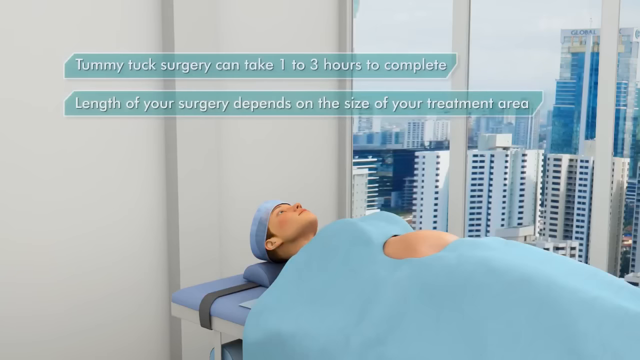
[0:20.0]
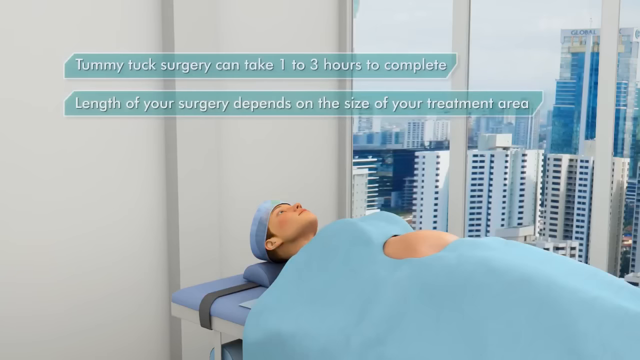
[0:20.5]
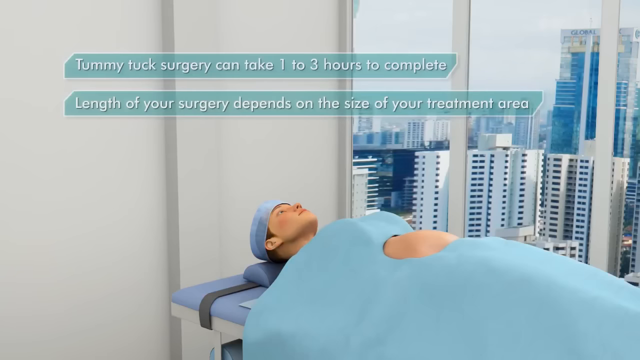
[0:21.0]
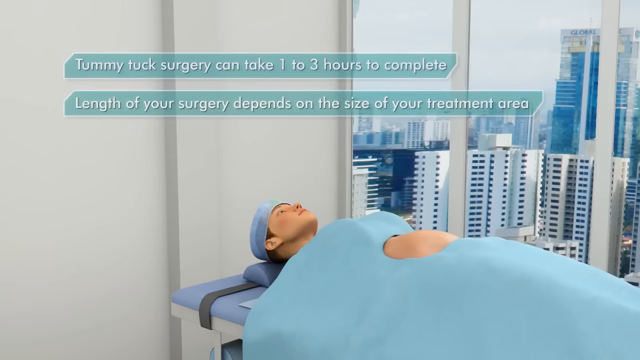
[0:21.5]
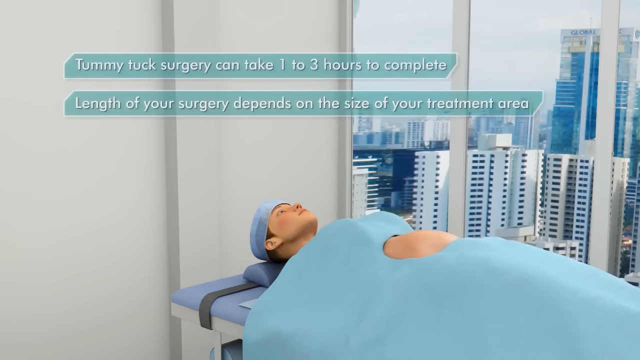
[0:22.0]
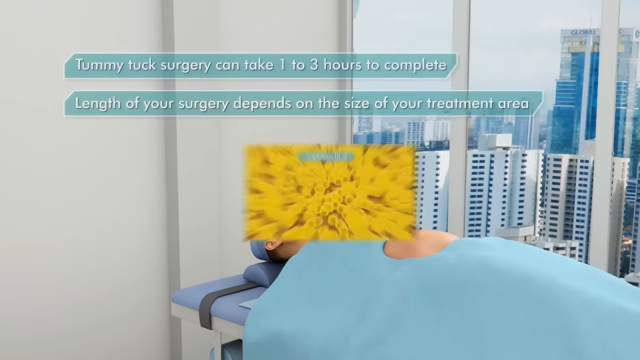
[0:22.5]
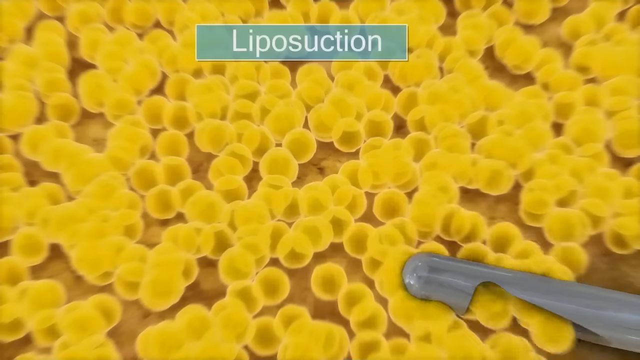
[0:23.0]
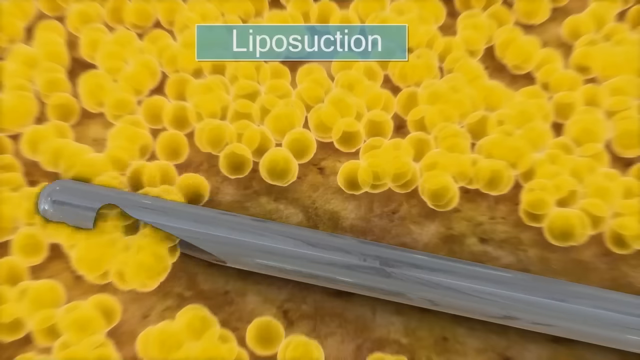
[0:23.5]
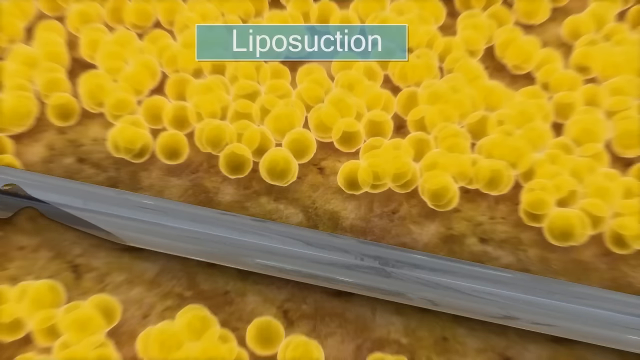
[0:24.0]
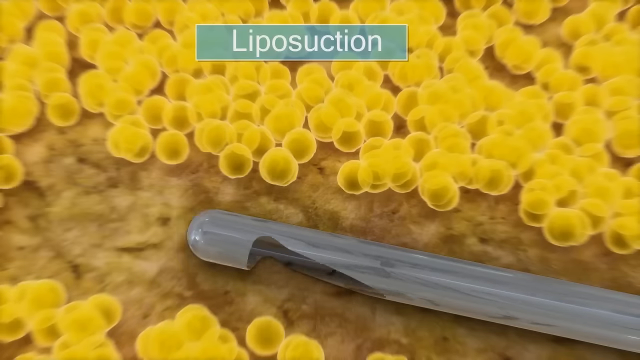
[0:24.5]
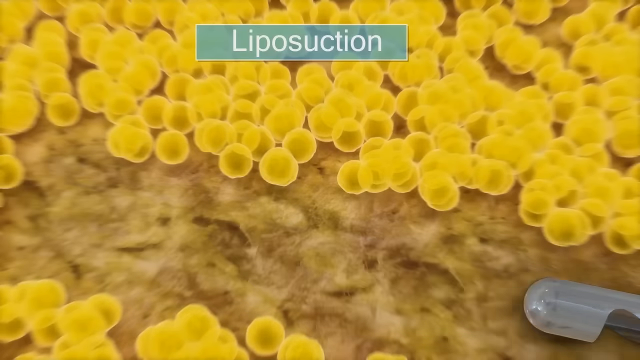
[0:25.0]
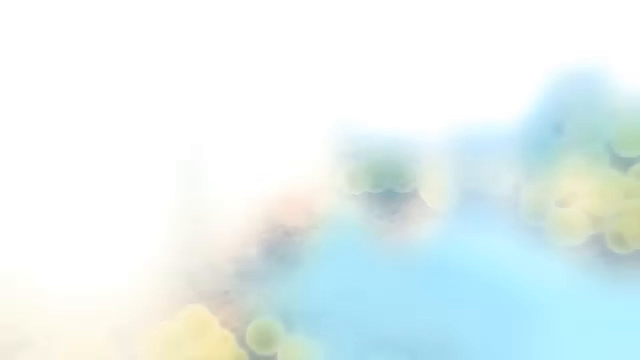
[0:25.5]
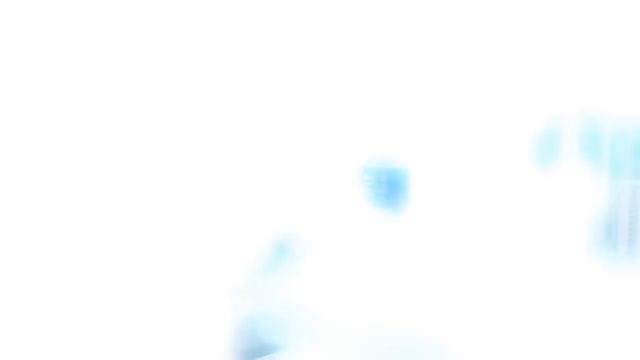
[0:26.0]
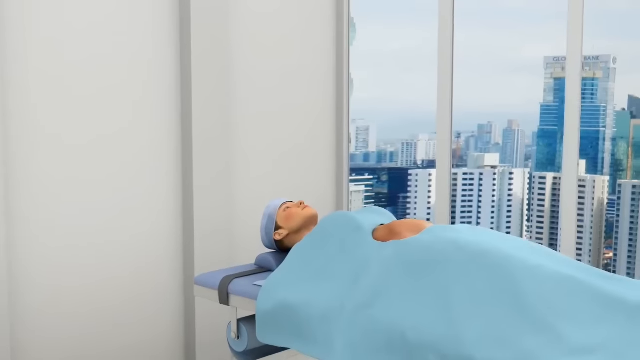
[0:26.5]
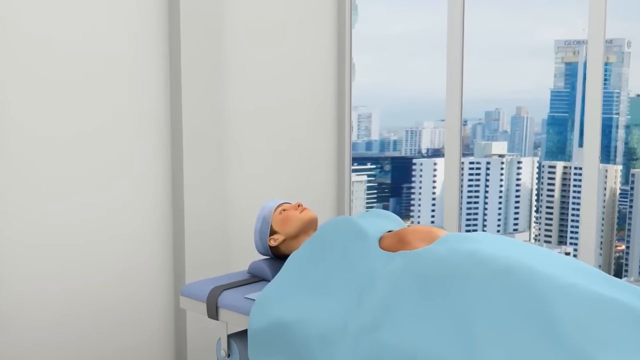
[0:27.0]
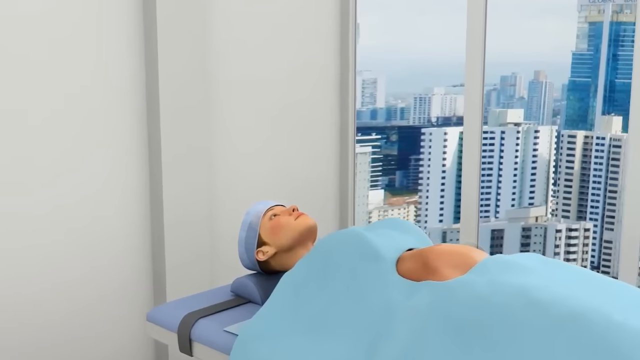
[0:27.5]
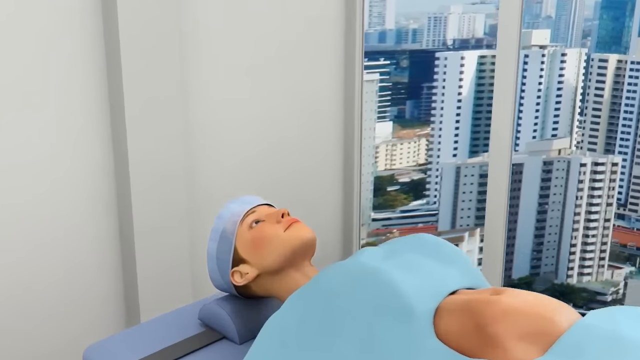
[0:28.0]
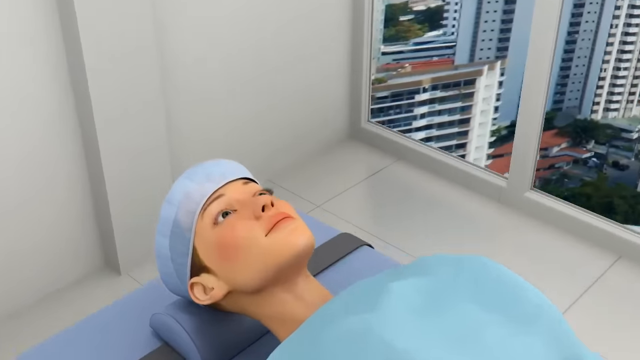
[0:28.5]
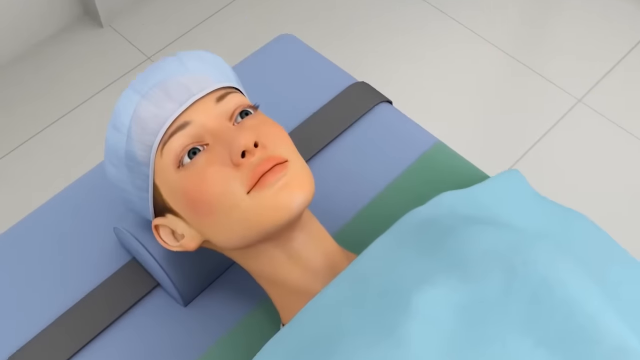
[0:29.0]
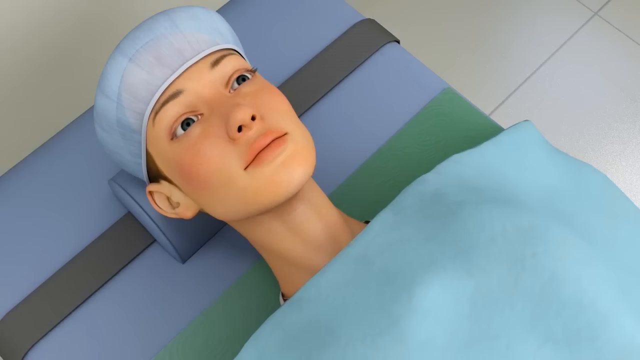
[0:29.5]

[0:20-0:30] An illustrated image shows a person lying on a surgery table. In the background, just above the person's head, is a white wall, and from the middle of the image very large glass windows reveal a cityscape outside. Some of the buildings are viewed from above, showing that the room is a couple of storeys high, higher than some of the multi-storey buildings outside. The person has a blue blanket over her body with a hole in the covering through which her stomach protrudes, and she wears a blue surgery cap. Towards the top of the screen are two tabs: a light blue tab with white words reading "tummy tuck surgery can take 1-3 hours to complete", and just below it a slightly longer second tab reading "length of your surgery depends on the size of your treatment area". The video then cuts to a close-up illustration of liposuction, in which a suction device goes in between yellow fat cells, shown as many small yellow balls.